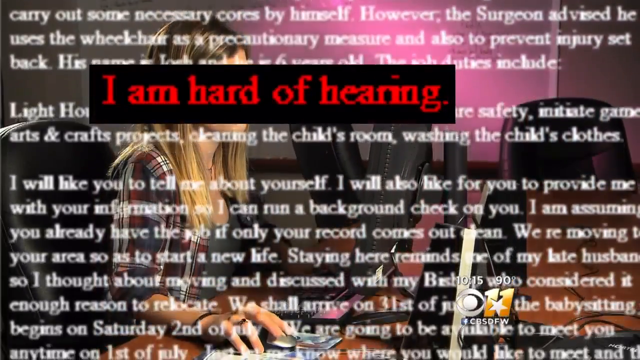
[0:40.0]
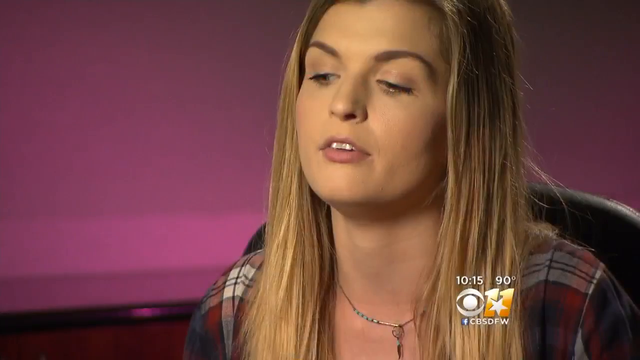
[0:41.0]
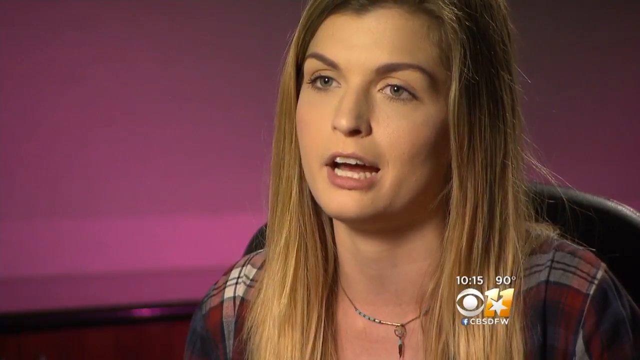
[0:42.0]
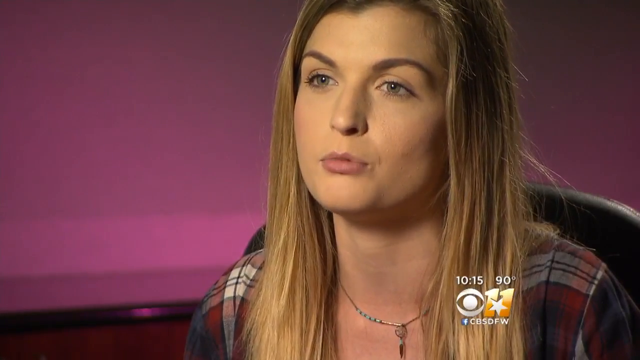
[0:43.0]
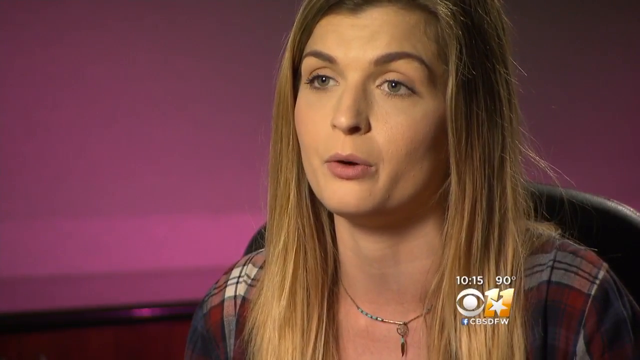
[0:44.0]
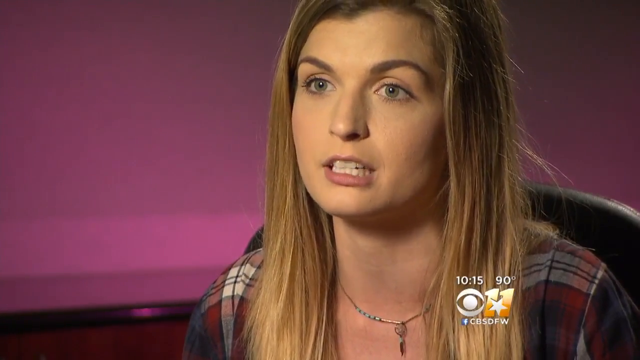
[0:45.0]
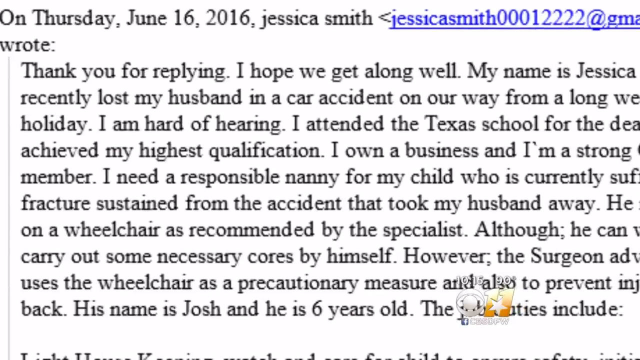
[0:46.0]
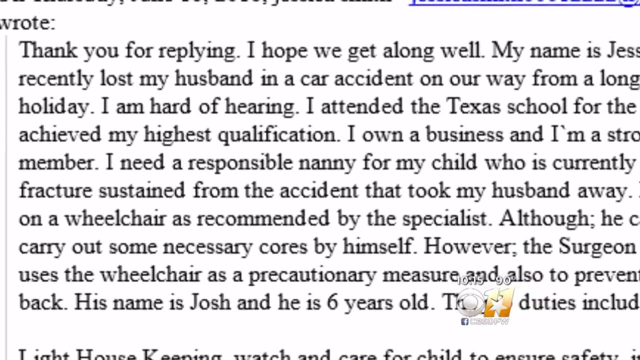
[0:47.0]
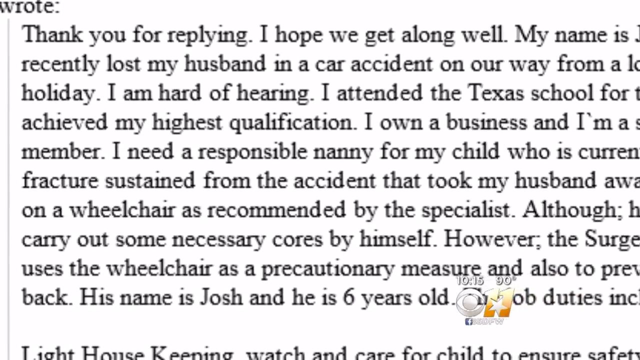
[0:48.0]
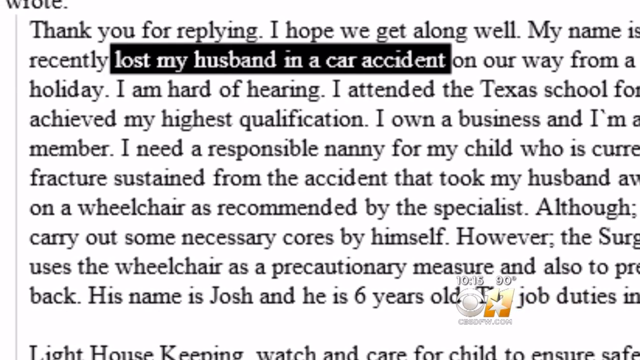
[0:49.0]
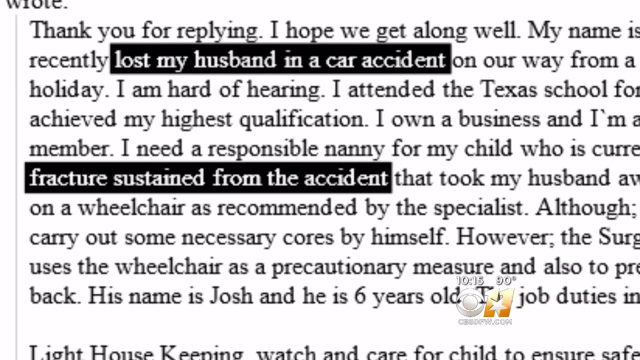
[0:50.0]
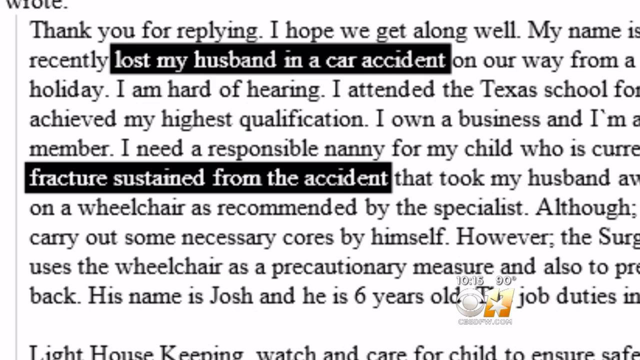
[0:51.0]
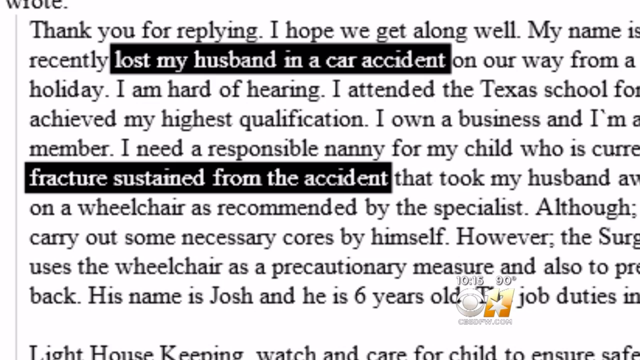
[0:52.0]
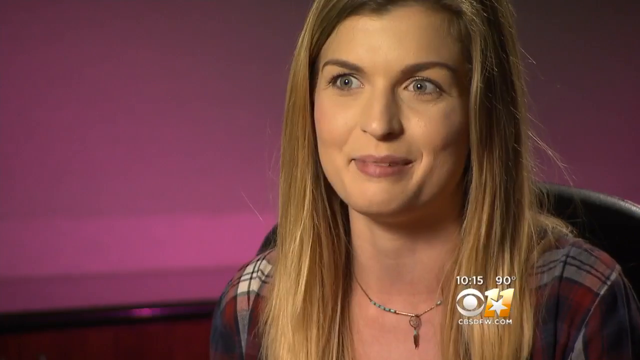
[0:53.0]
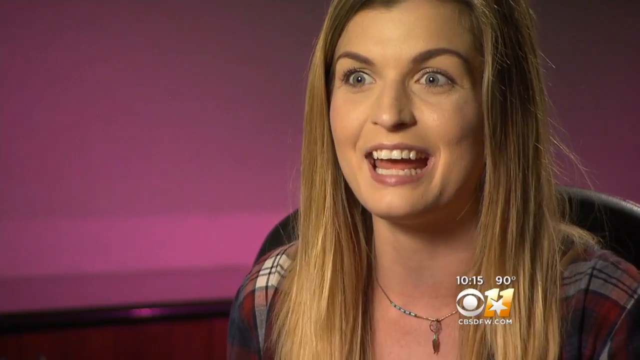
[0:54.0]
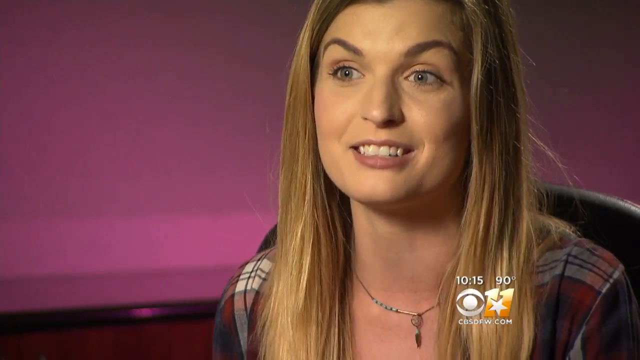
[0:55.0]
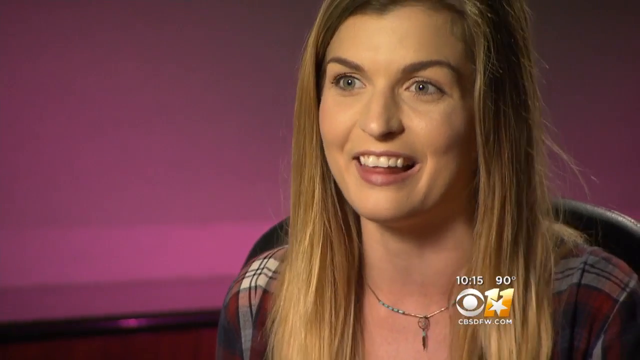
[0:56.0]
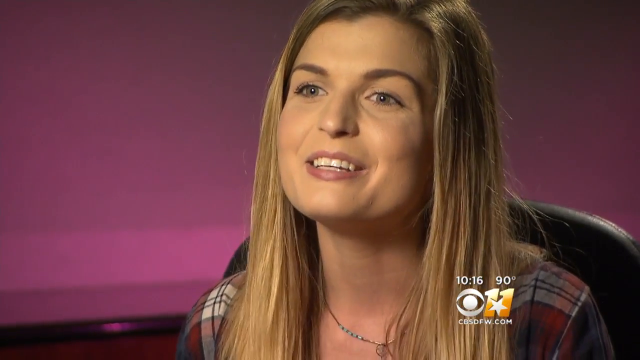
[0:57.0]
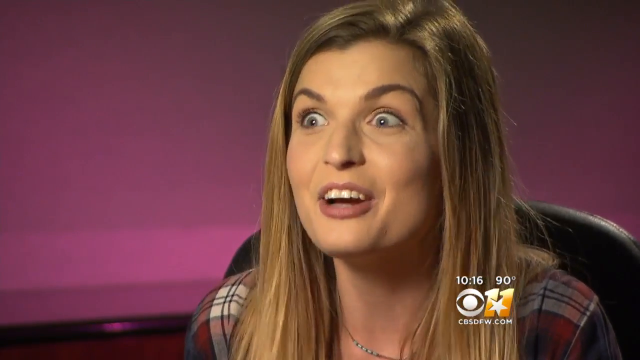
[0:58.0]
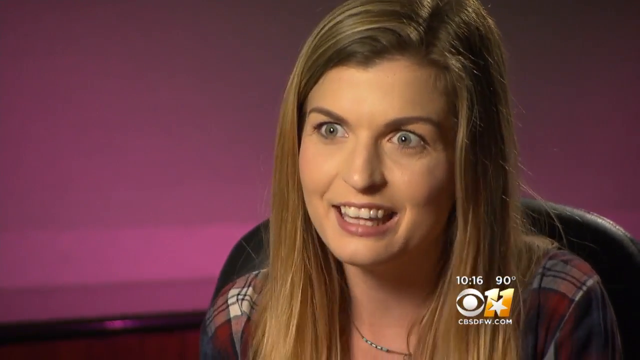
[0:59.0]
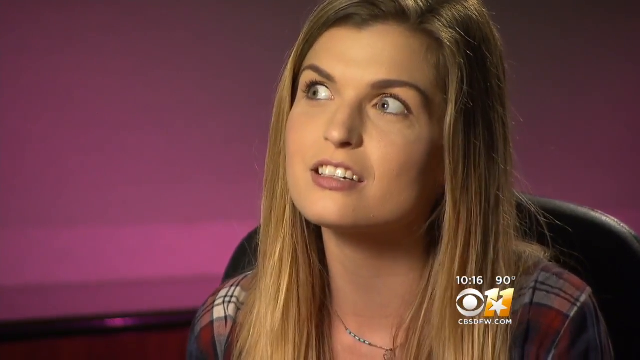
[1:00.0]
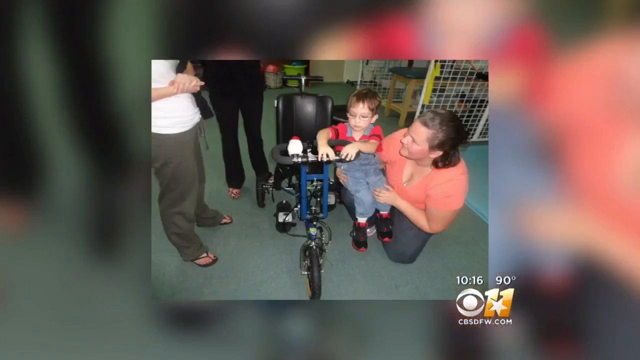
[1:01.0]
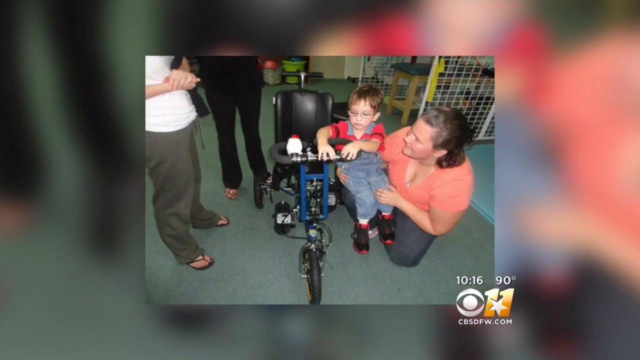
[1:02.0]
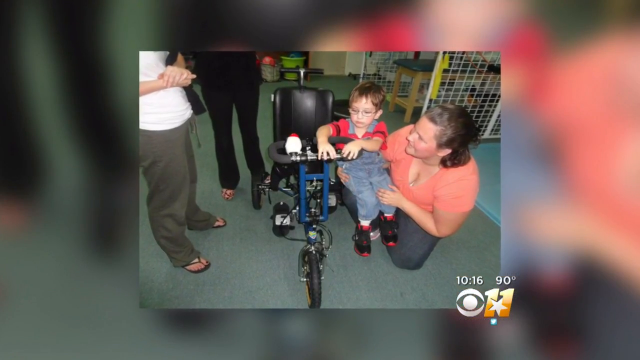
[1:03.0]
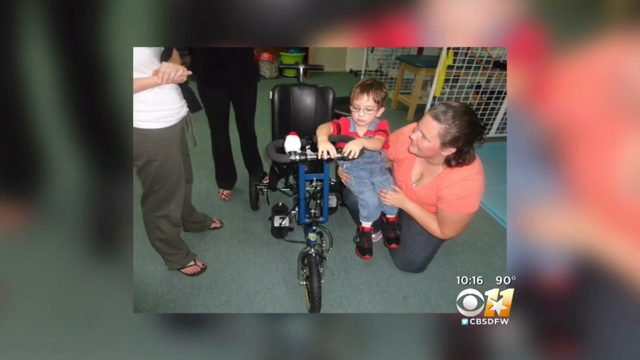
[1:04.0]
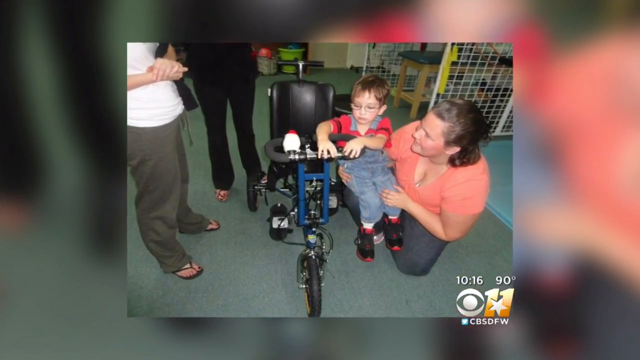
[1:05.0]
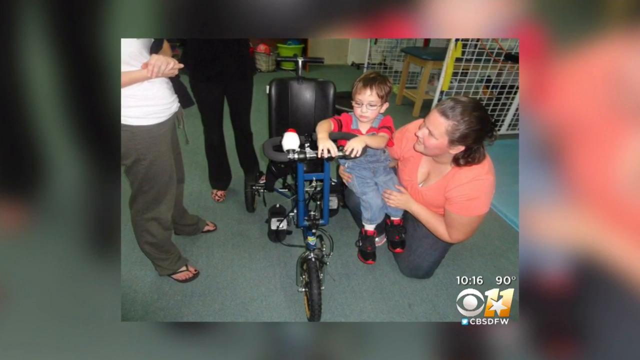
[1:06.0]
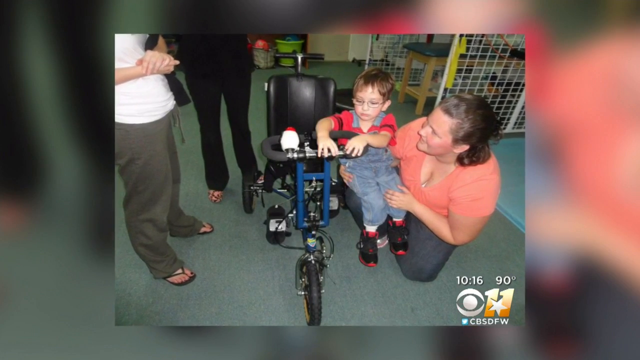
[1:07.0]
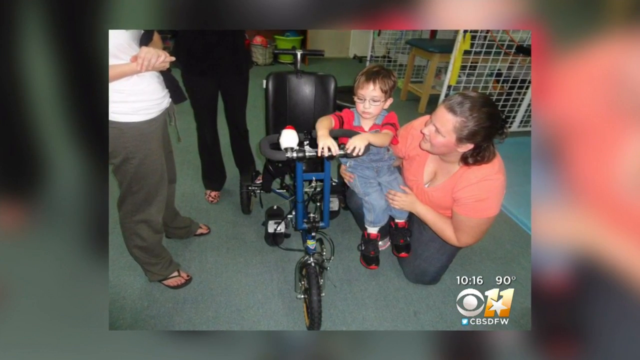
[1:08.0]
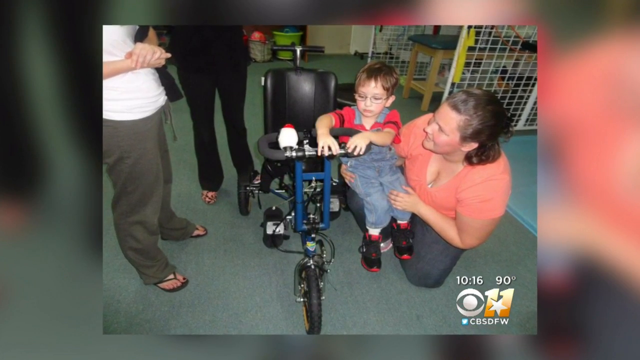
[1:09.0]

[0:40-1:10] The highlighted red text "I'm part of hearing" remains on screen. A pretty blonde-haired Caucasian female, probably around 25 or maybe a bit younger, apparently a recent graduate, is shown kind of talking. Text on the screen reads "I am part of hearing, attended Texas school, achieved my highest qualification, I own a business, and I need a responsible nanny for my child who is currently in a wheelchair. I was recommended by a specialist." The video transitions to another screen showing the female talking, and to a screen showing a kid, Josh, potentially six years old, kind of sitting in some kind of special wheelchair device.